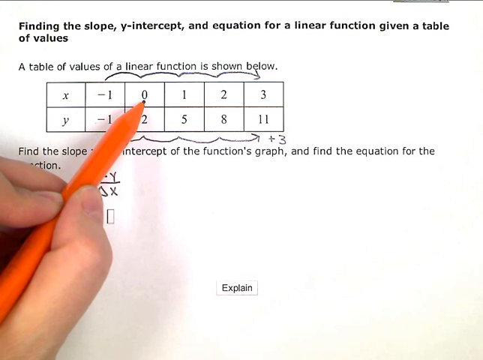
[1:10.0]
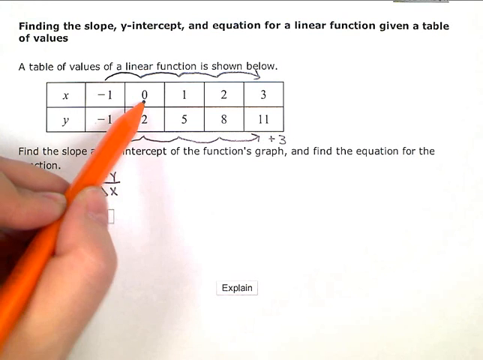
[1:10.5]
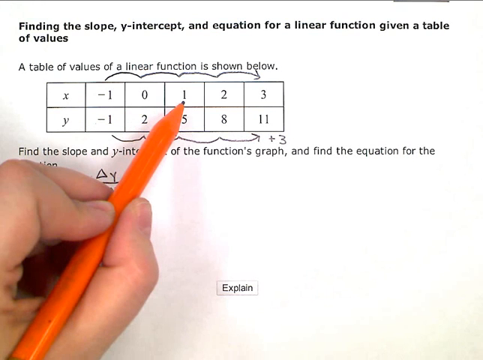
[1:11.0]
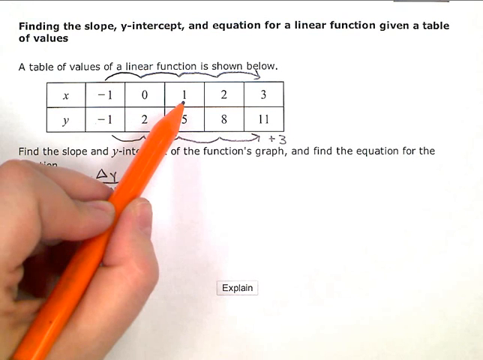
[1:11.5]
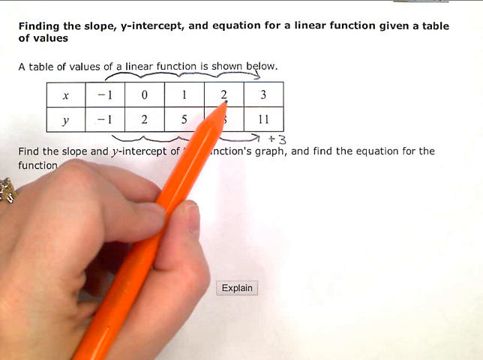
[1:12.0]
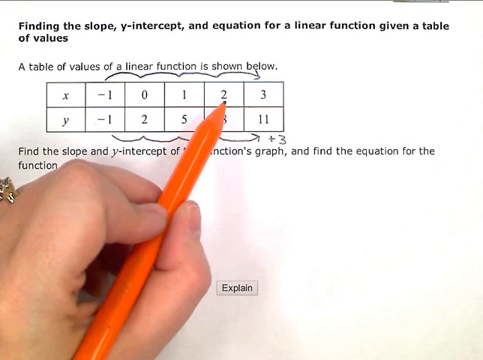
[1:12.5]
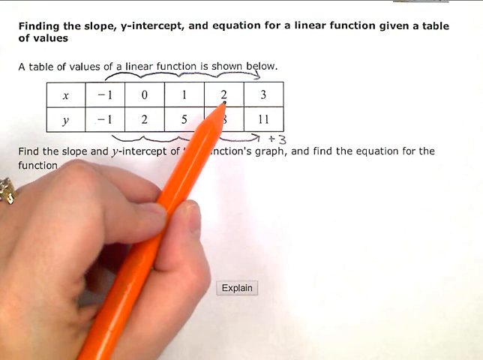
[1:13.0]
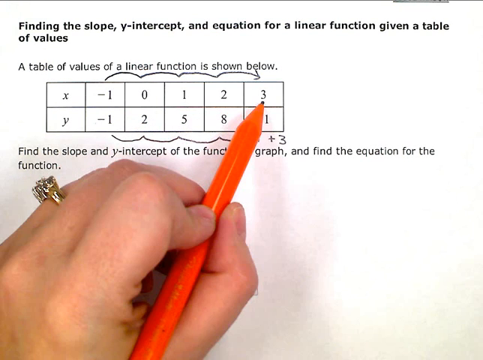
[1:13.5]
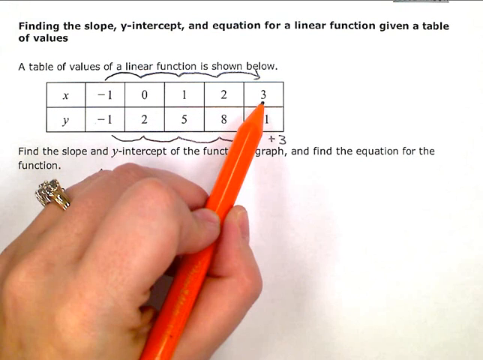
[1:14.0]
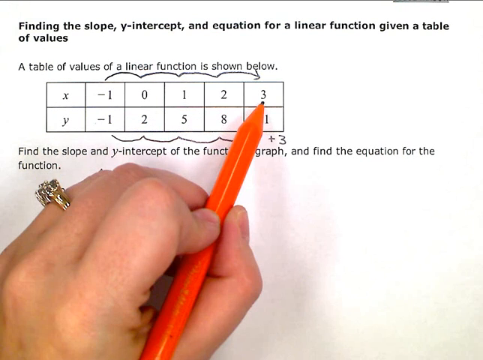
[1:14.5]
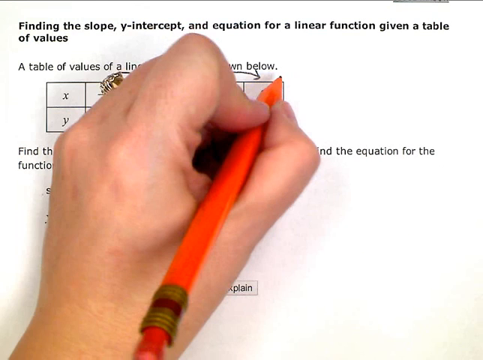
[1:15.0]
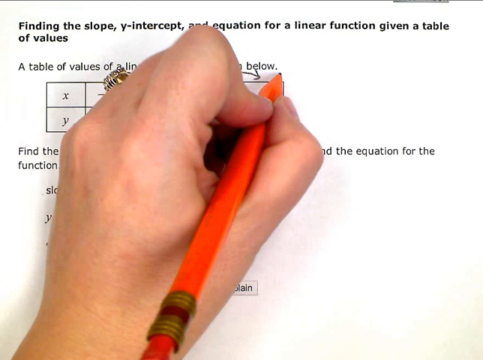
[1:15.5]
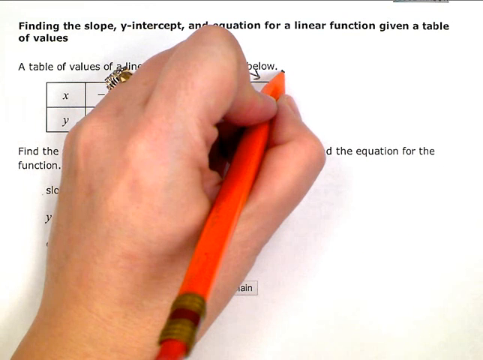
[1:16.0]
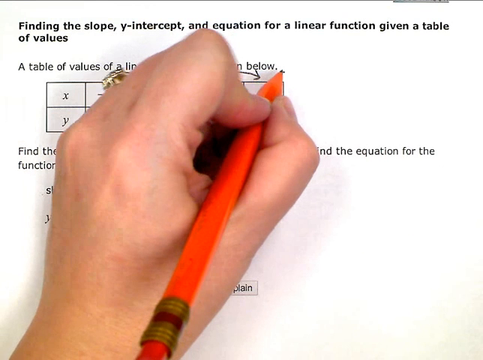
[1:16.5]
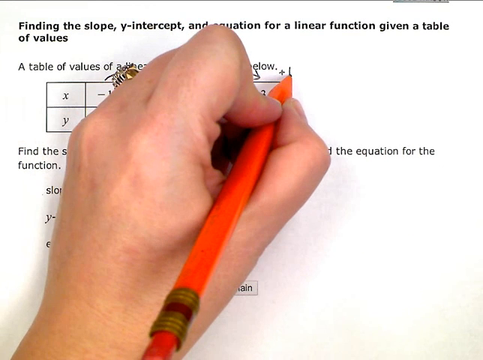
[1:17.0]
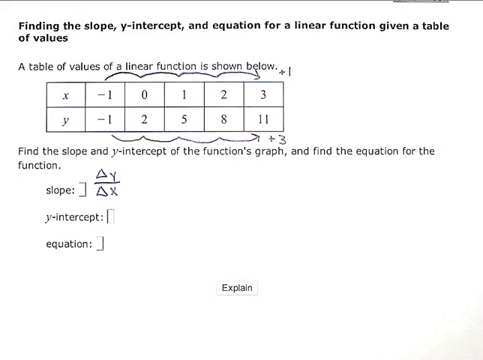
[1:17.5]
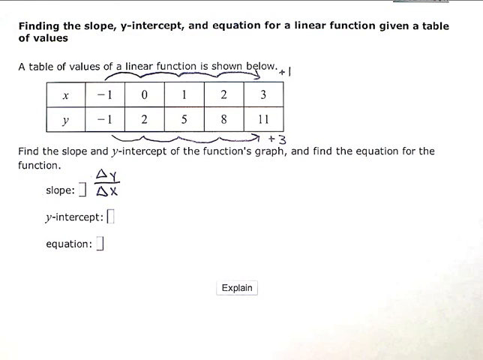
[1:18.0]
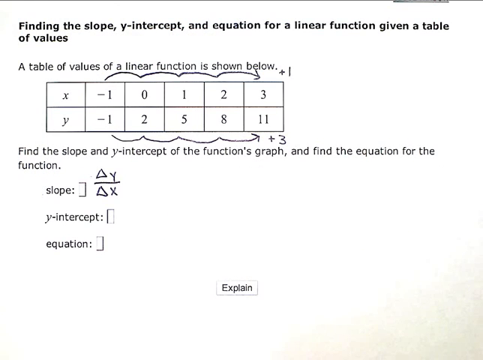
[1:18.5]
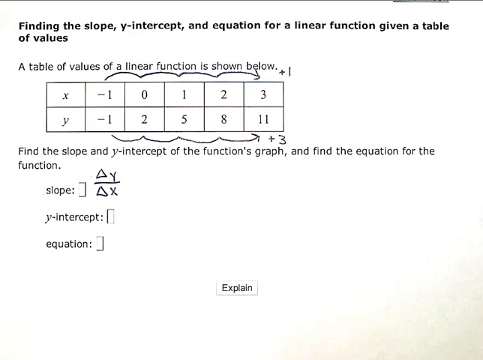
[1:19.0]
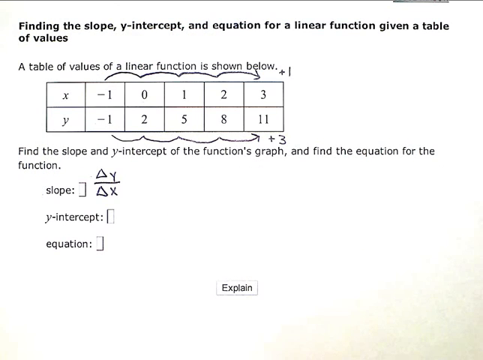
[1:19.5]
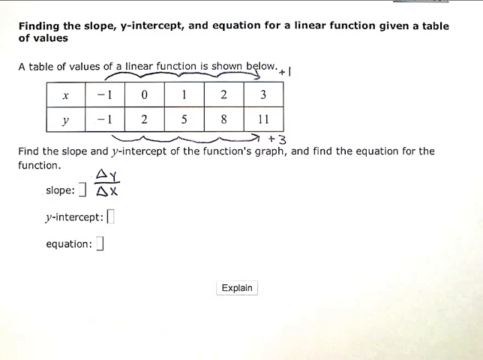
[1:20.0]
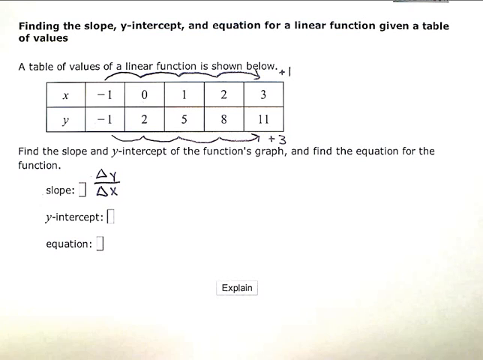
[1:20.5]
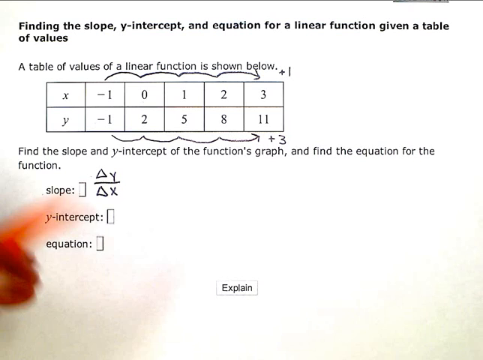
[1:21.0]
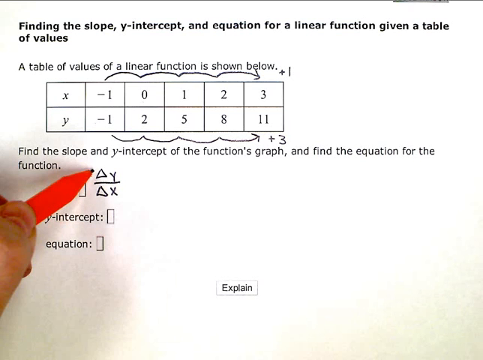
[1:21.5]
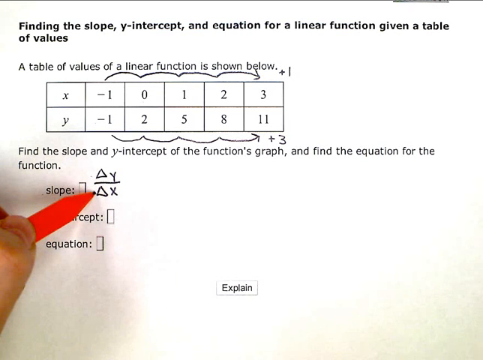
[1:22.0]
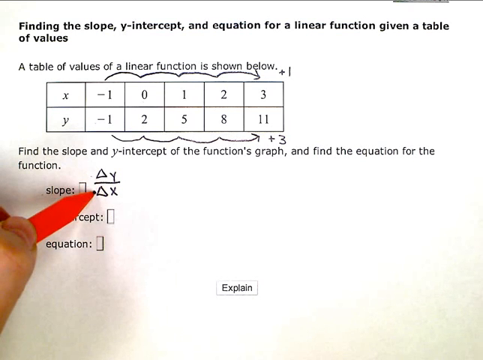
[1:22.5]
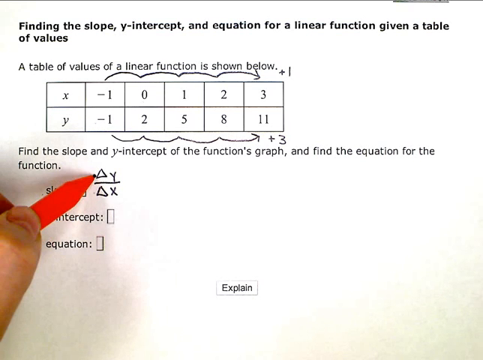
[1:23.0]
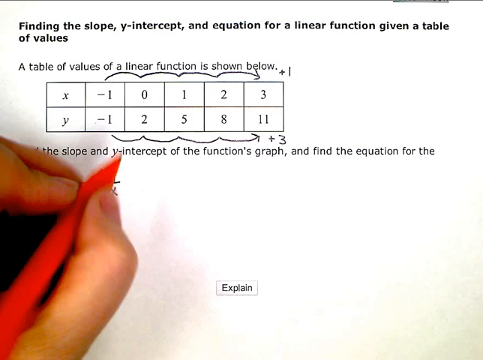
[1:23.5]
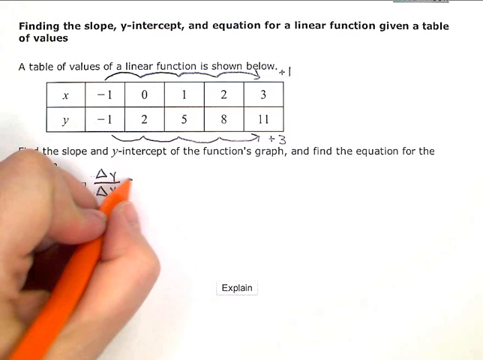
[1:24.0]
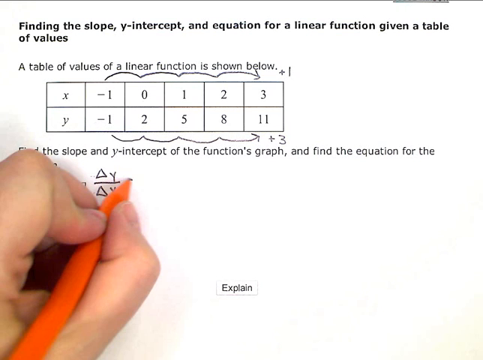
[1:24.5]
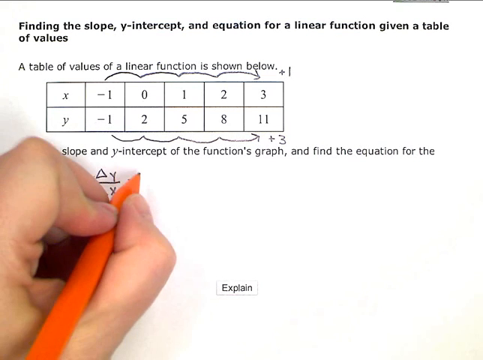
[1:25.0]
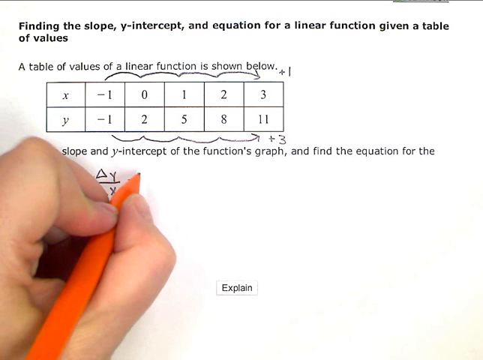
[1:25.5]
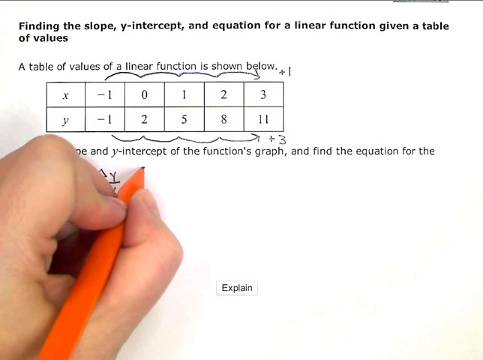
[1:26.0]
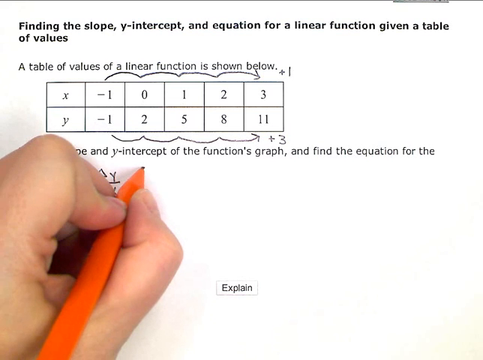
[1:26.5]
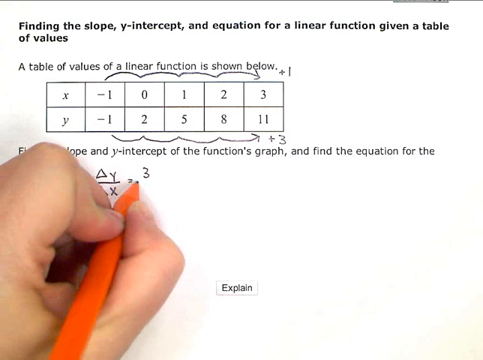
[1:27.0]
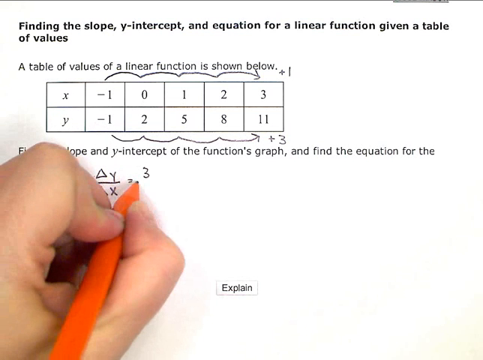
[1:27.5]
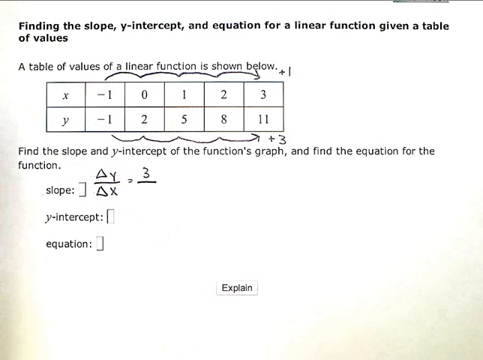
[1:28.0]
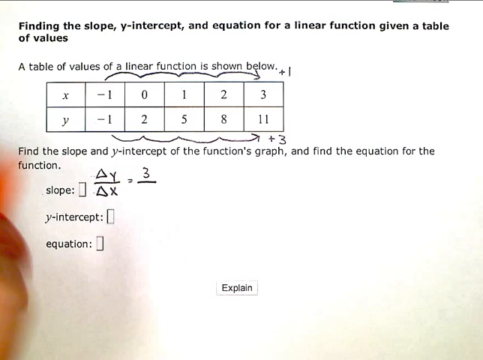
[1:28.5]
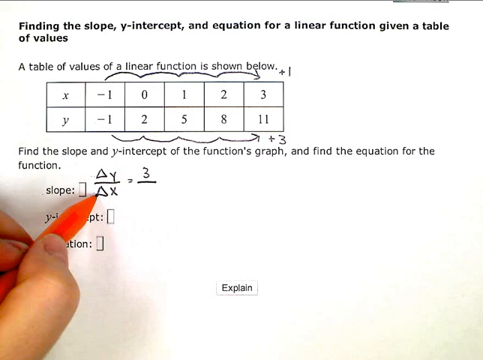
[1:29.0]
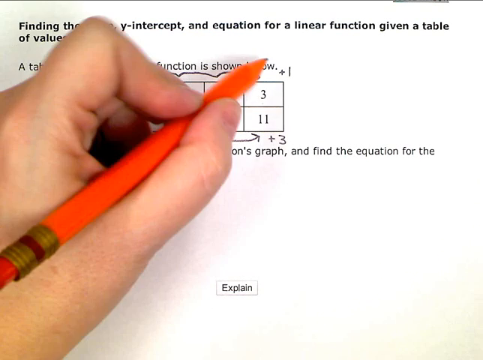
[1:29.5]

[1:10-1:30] The assignment titled "finding the slope, y-intercept, and equation for a linear function given a table of values" is on screen, with a table below: x goes -1, 0, 1, 2 and 3, and y goes -1, 2, 5, 8, 11. Each next x increases by one, while y increases by three. The equation for the slope is shown as delta y divided by delta x. The person is holding a red pen, has a ring on the second finger from the left, and writes with her left hand. She points at certain things, and toward the end tries to solve the equation, typing three and trying to put divided by three.